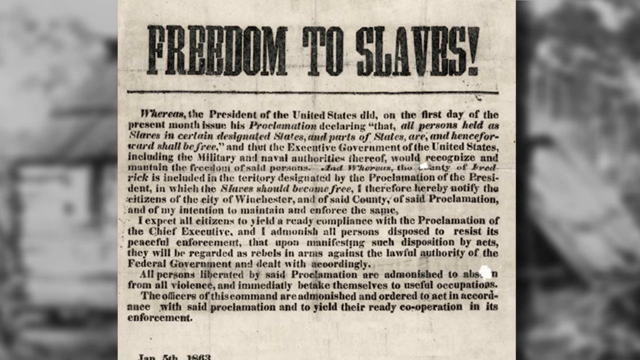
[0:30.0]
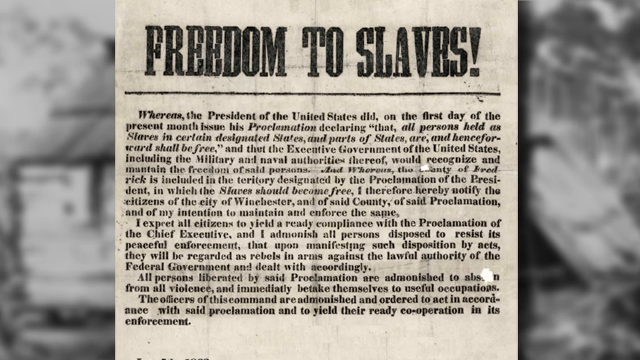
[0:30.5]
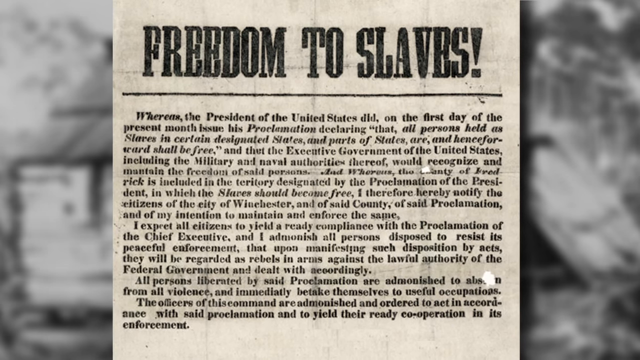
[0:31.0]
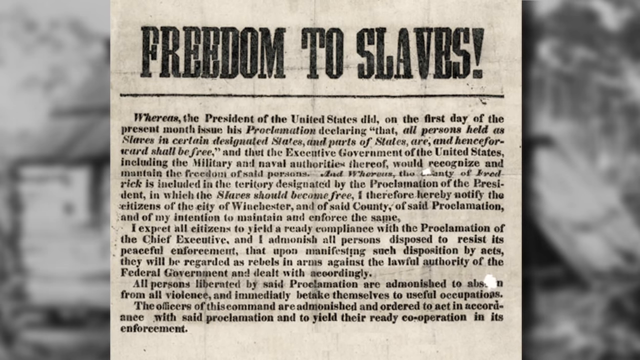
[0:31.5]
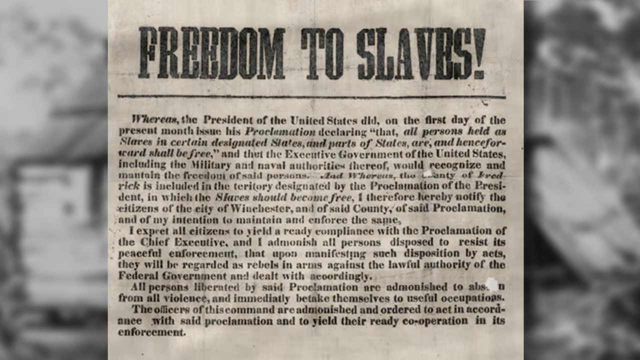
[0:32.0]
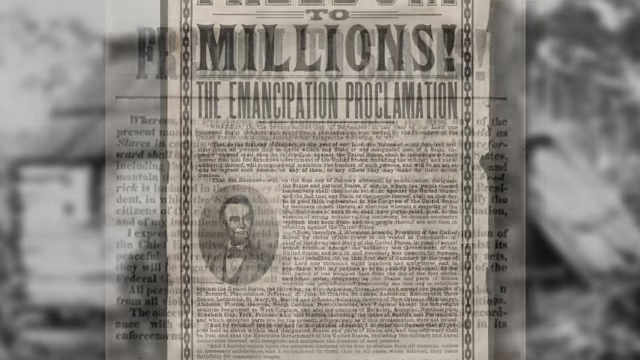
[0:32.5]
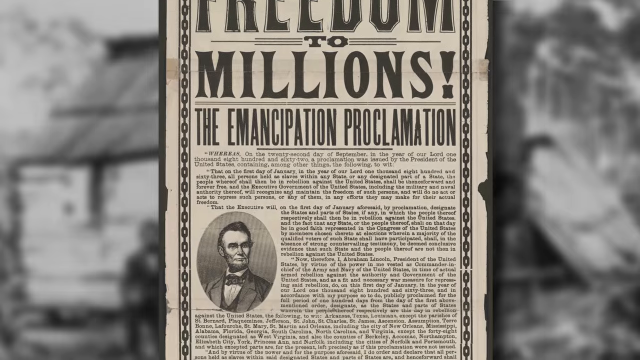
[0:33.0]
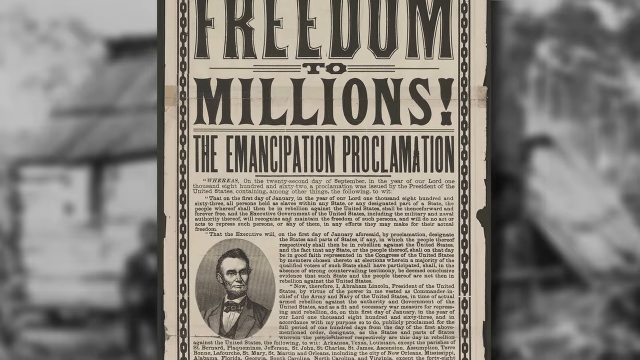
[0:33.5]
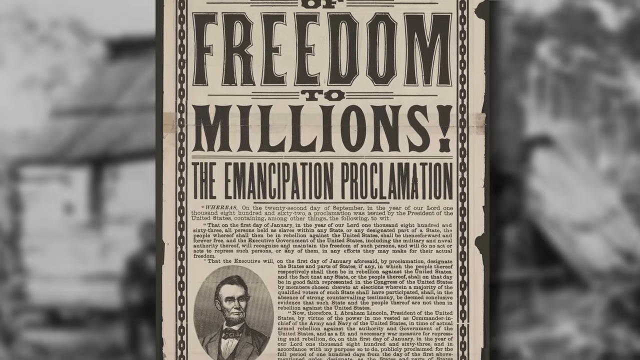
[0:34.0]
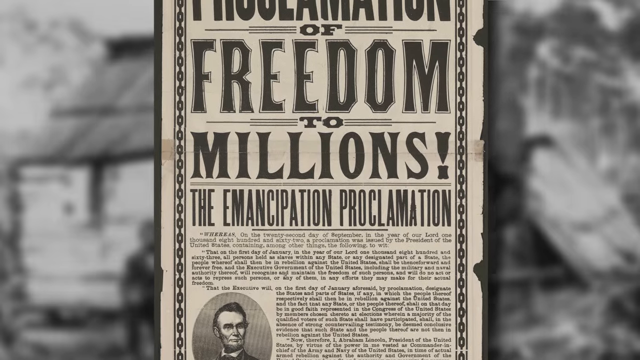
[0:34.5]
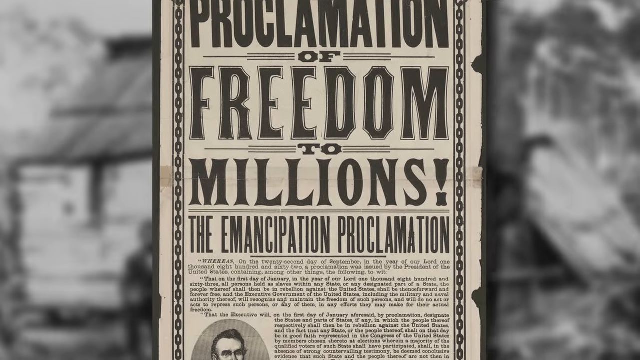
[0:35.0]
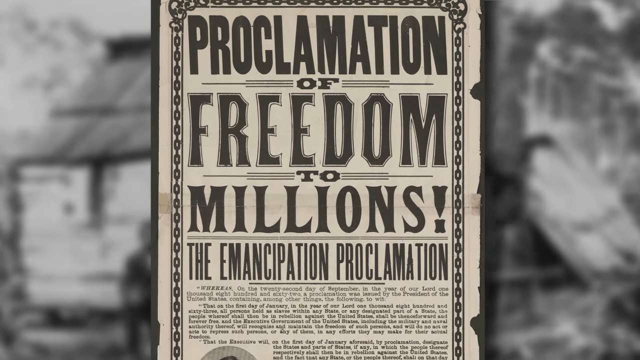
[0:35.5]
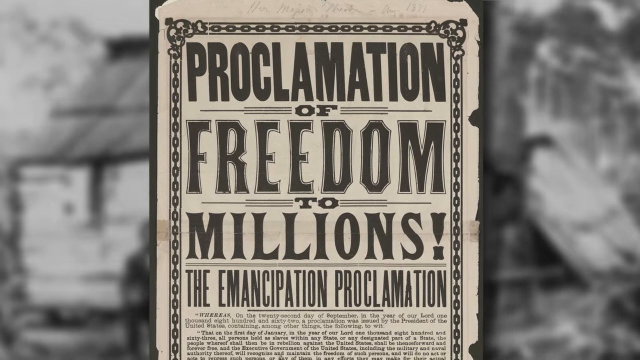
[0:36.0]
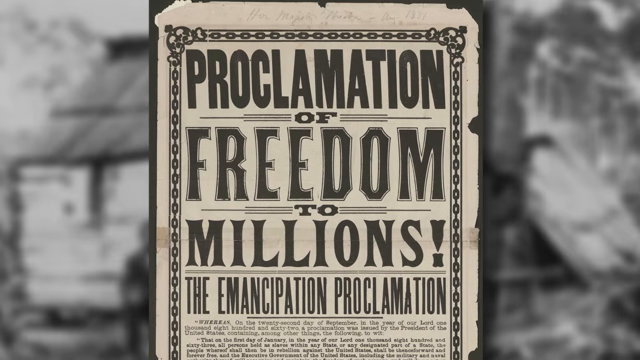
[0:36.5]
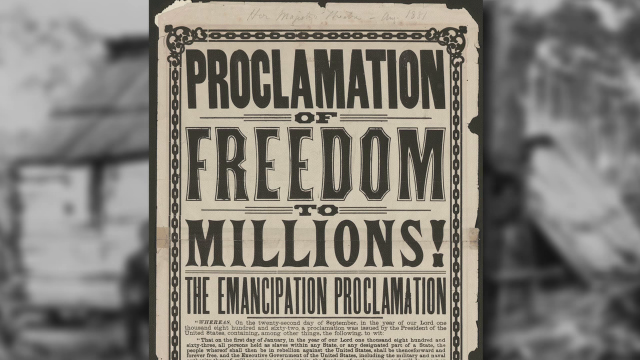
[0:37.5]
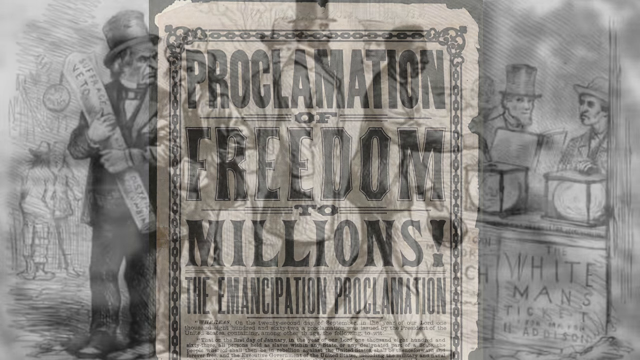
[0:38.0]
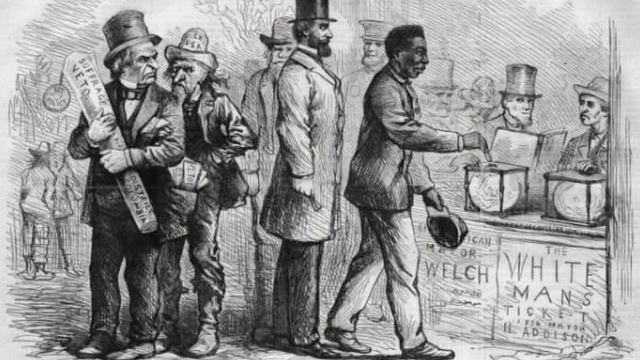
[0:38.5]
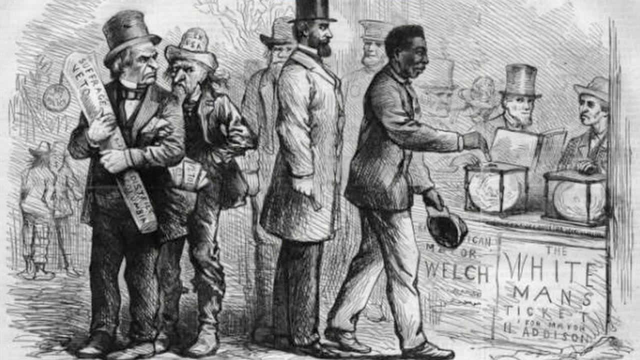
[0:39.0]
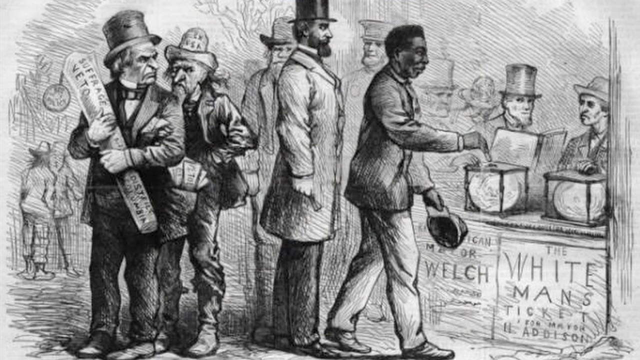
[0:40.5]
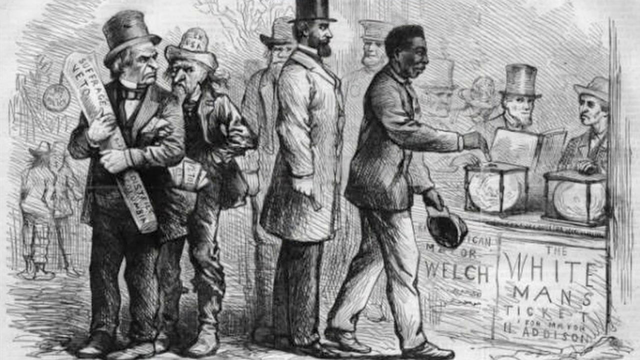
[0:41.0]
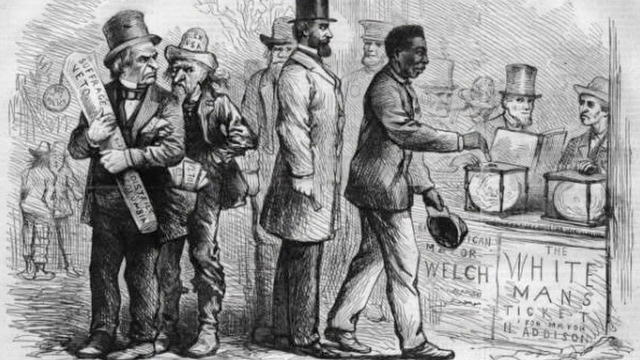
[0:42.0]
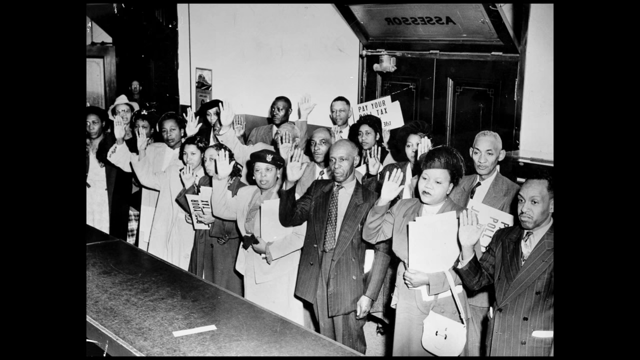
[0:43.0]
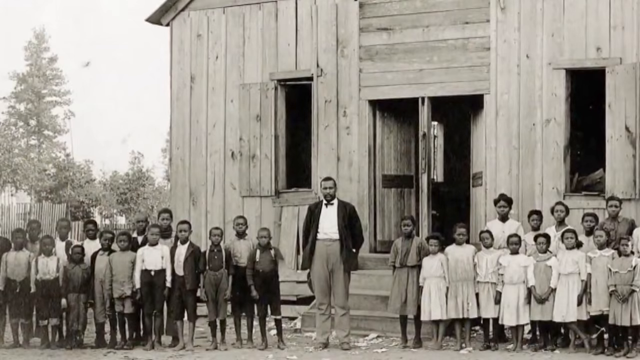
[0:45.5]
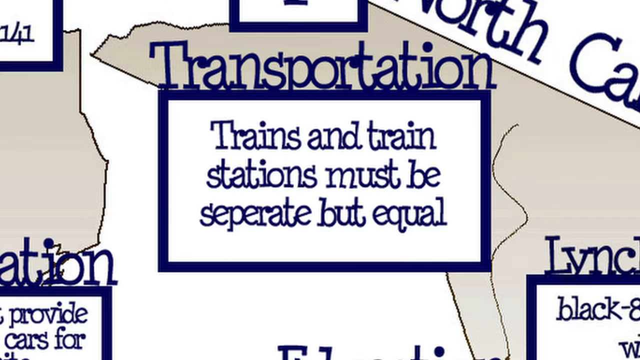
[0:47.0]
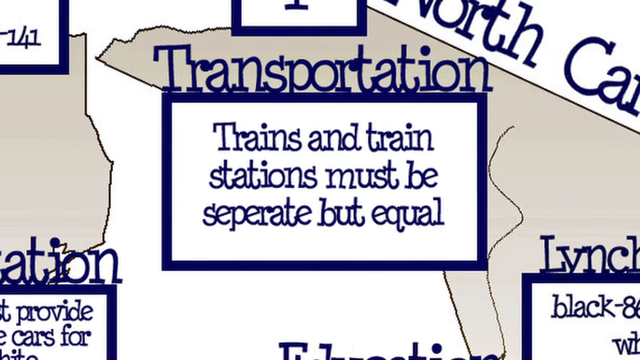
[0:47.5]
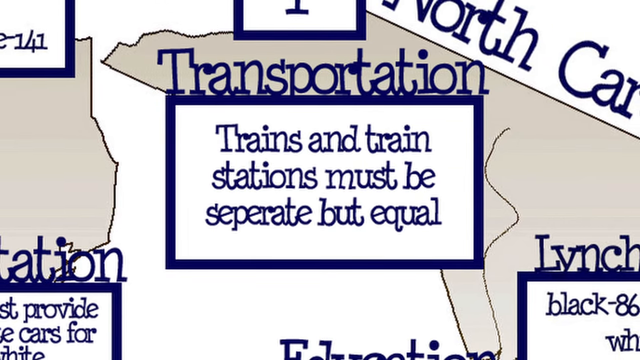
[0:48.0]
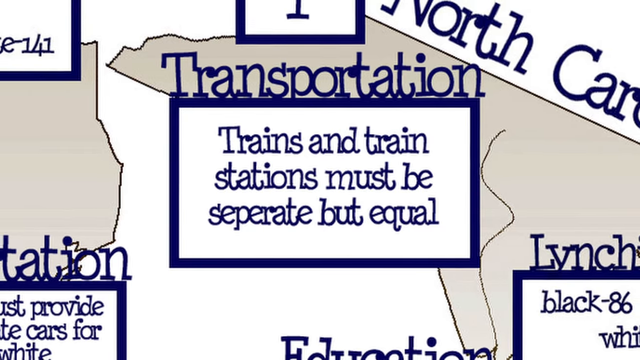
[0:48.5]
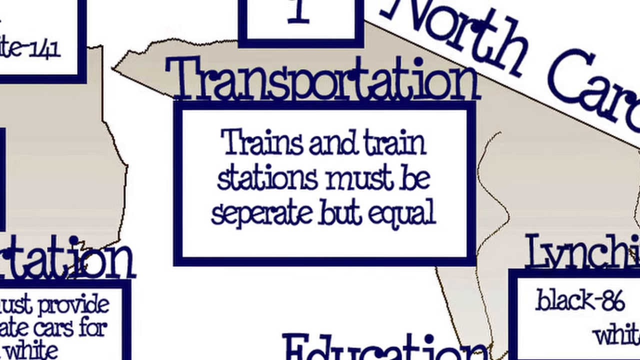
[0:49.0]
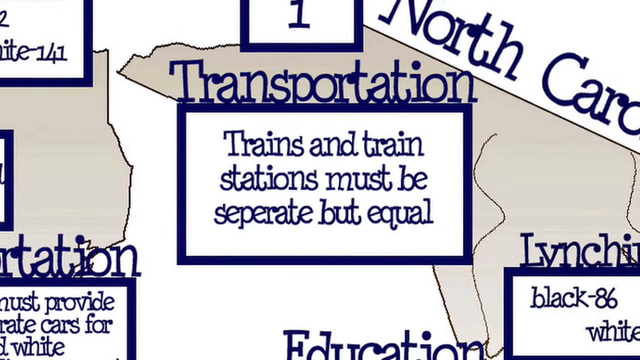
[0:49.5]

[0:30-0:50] Text reads "Whereas the president of the United States did on the first day of the present month issue his proclamation declaring that all persons held as slaves in certain states and parts of states" shall be free. The text "proclamation of freedom to millions" and "emancipation proclamation" appear, apparently referring to a document Abraham Lincoln signed. Abraham Lincoln is shown in a black hat. Many African Americans with their hands up are seen inside some type of building, then an African American man with a group of kids at what is either a church or a school building. Text reads "transportation trains and train station must be separate but equal".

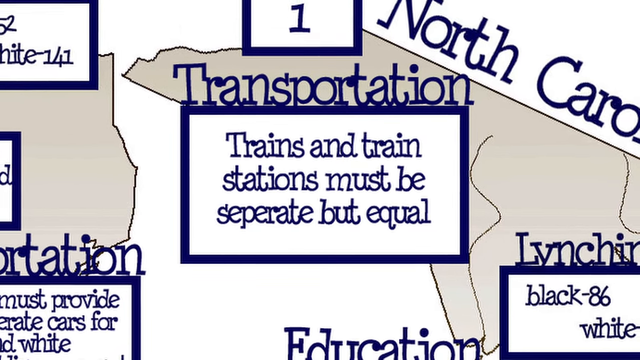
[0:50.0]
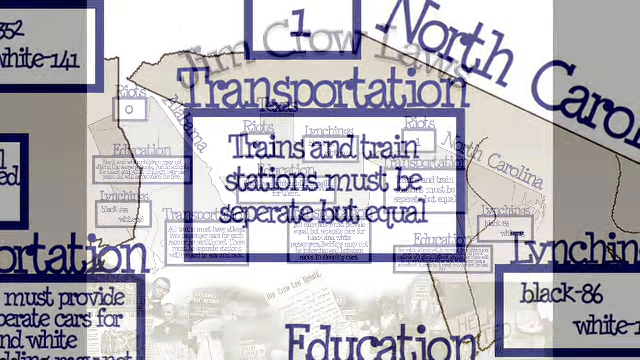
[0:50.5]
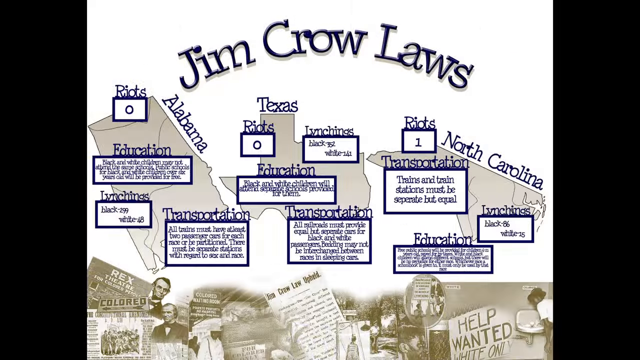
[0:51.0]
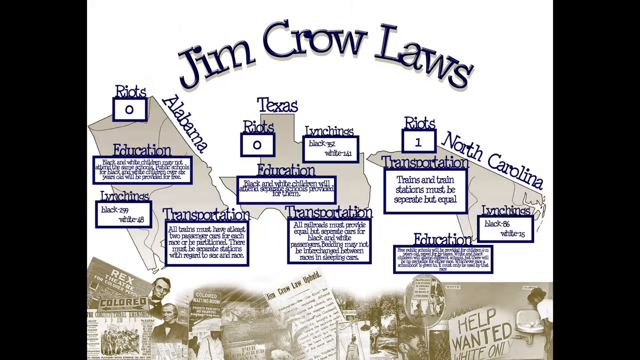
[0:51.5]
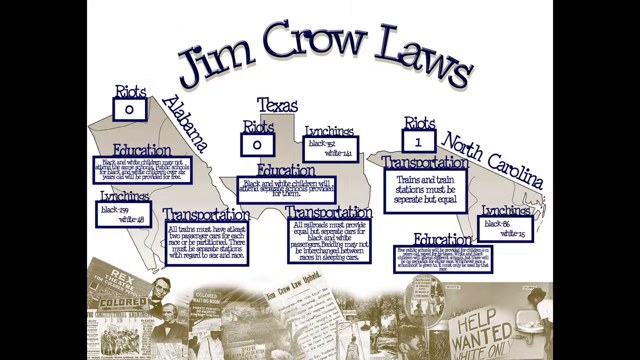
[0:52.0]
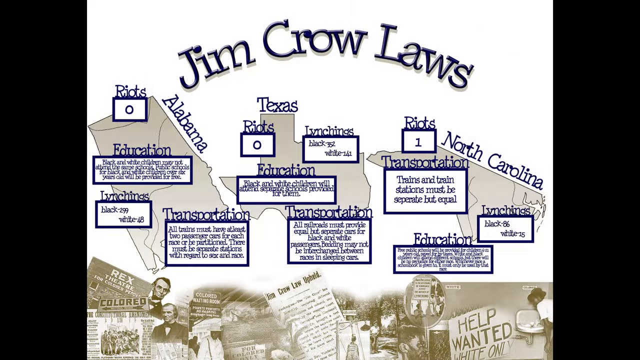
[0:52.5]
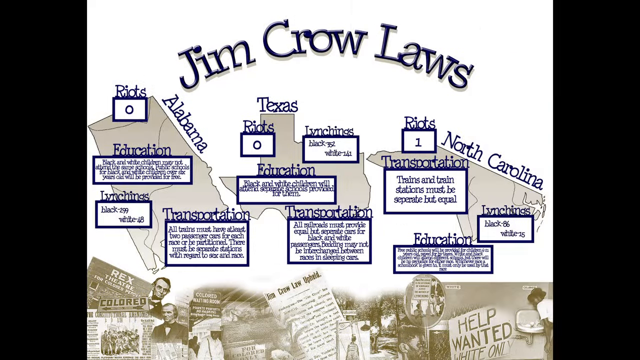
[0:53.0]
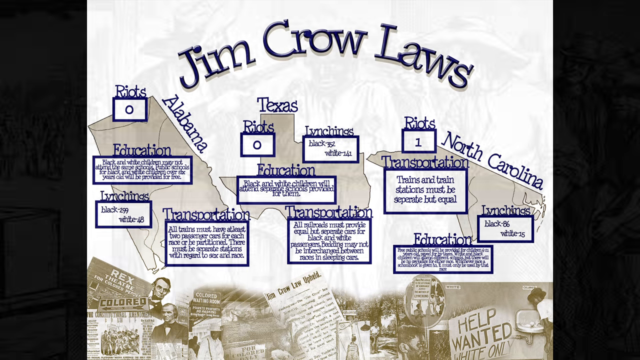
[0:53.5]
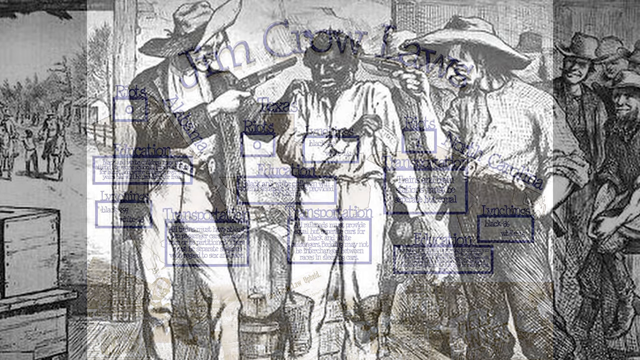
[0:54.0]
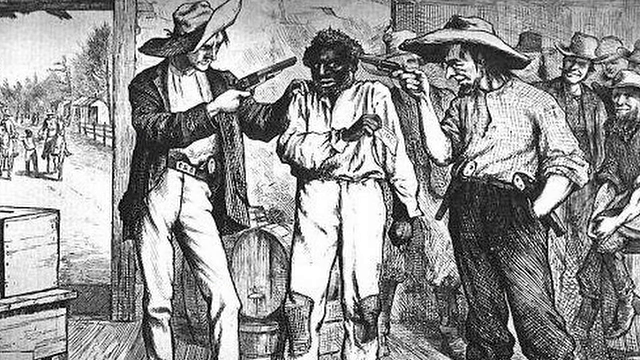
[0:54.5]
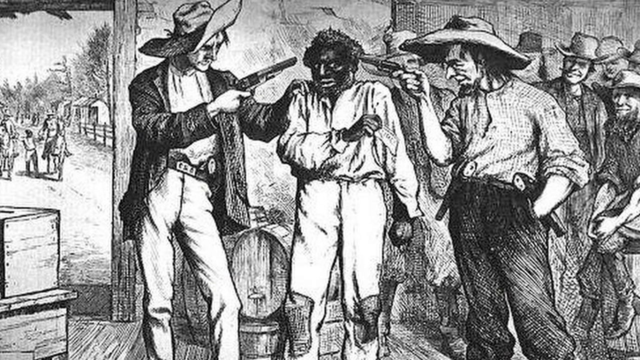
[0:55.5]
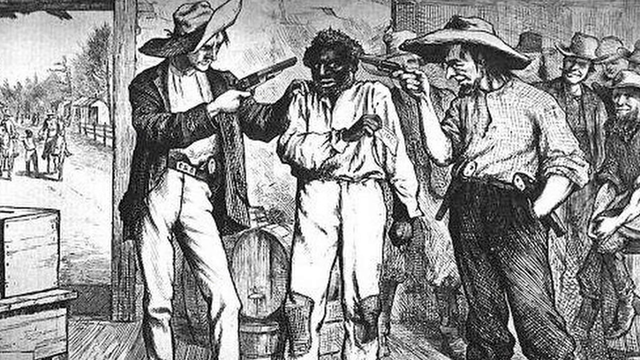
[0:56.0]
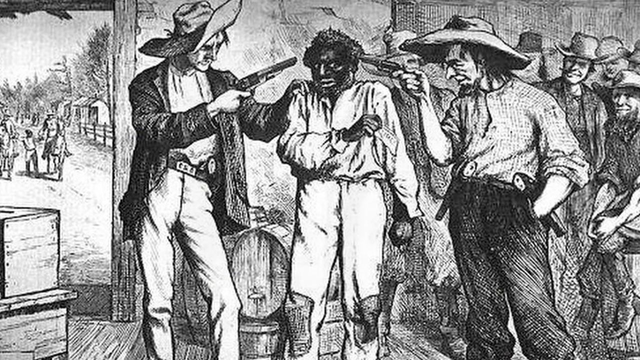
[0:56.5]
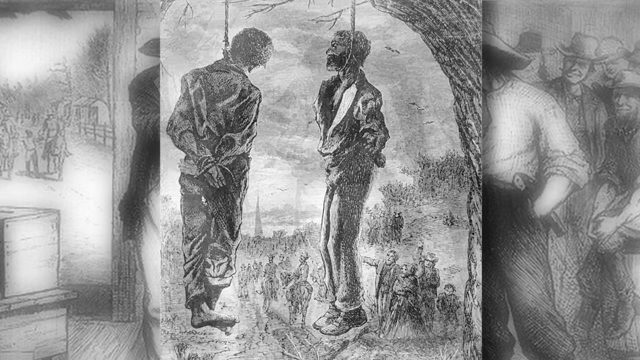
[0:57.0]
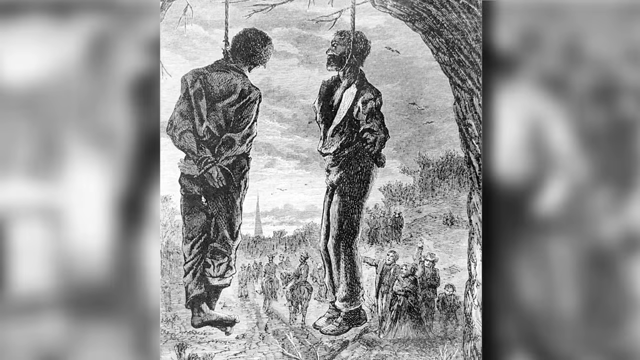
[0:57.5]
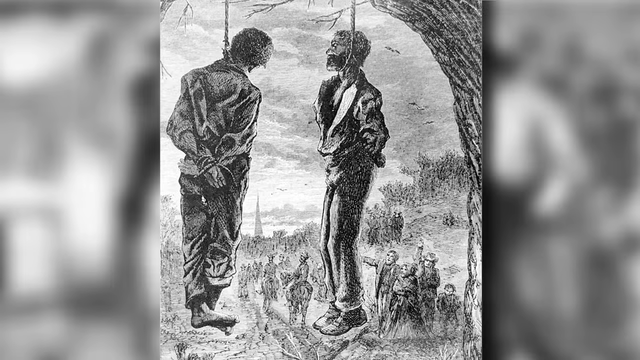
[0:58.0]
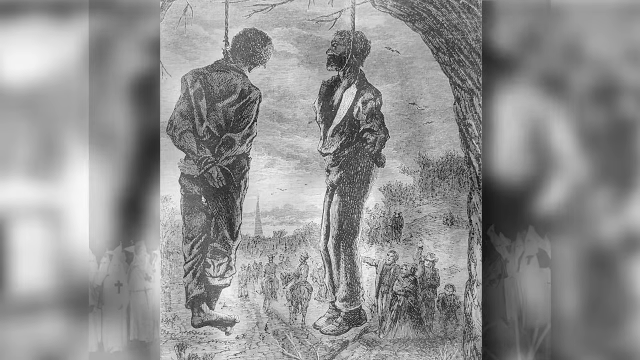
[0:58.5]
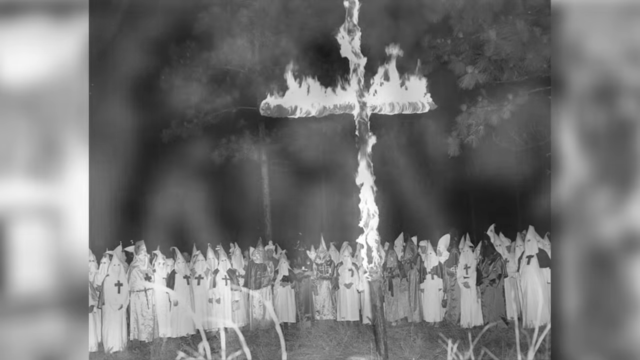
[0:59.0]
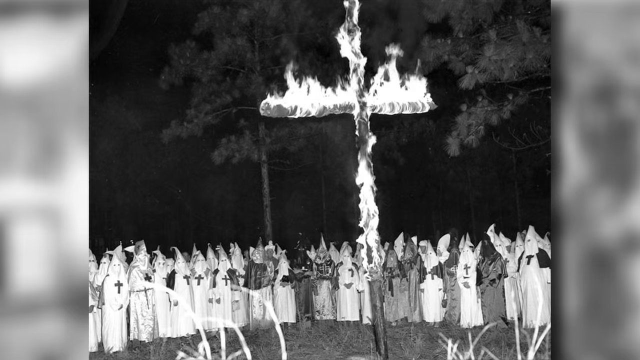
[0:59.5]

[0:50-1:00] The text "transportation trains and train stations must be separate but equal" is on screen along with "Jim Crow laws" and the states Alabama, Texas and New Carolina, with figures listed for each: zero for Alabama and Texas and one for New Carolina. Categories labelled lynching, education and transportation each have different wording. Caucasian men point two guns toward a black man, possibly a slave, with many other Caucasian people in the background. A black-and-white illustration of a lynching shows African American people with ropes around their necks tied up to a tree, their hands bound and their feet possibly bound as well. The last part shows what looks like a KKK cross burning.